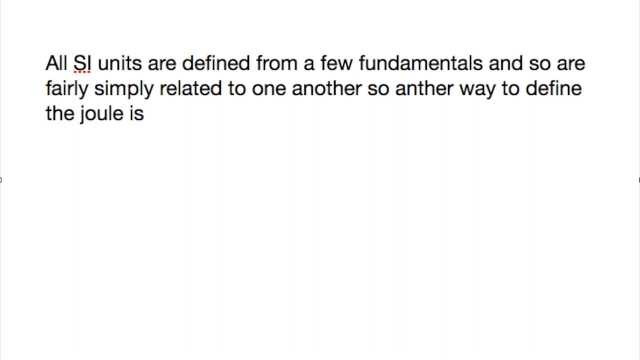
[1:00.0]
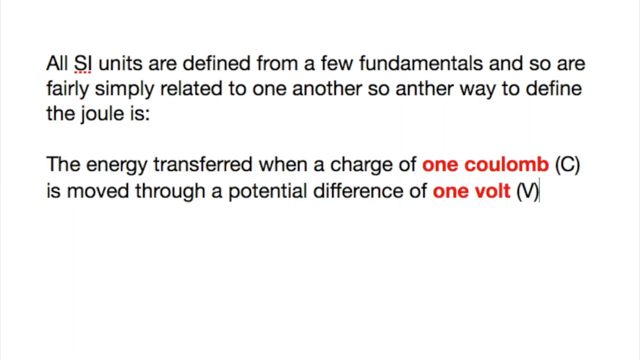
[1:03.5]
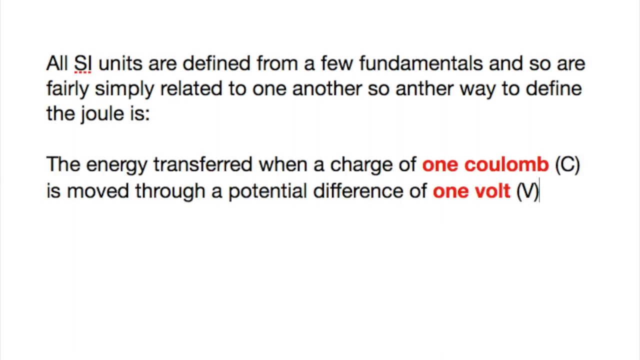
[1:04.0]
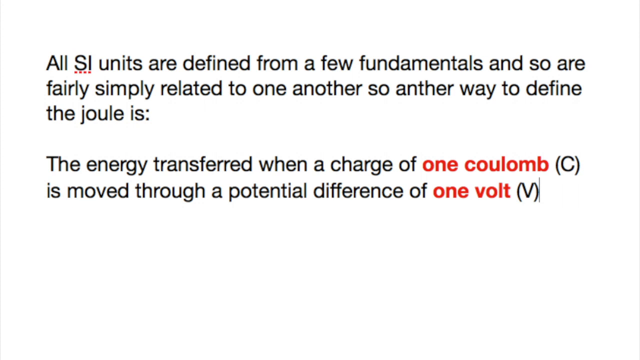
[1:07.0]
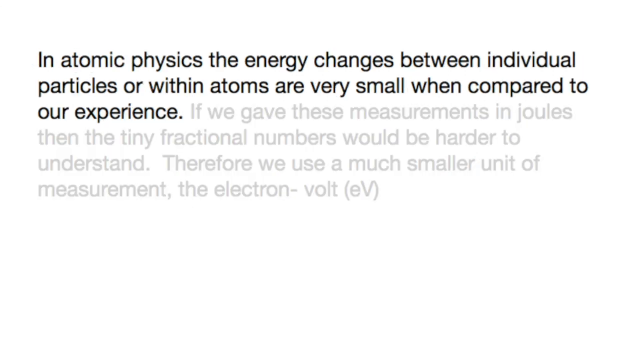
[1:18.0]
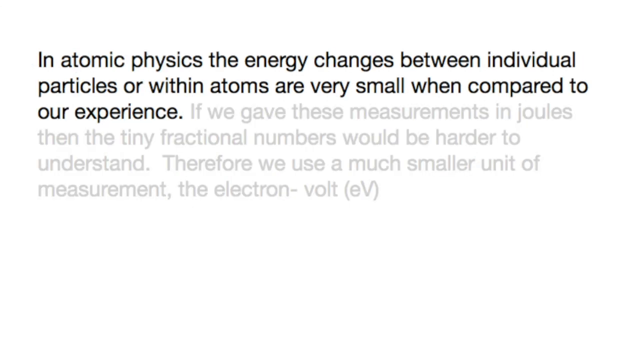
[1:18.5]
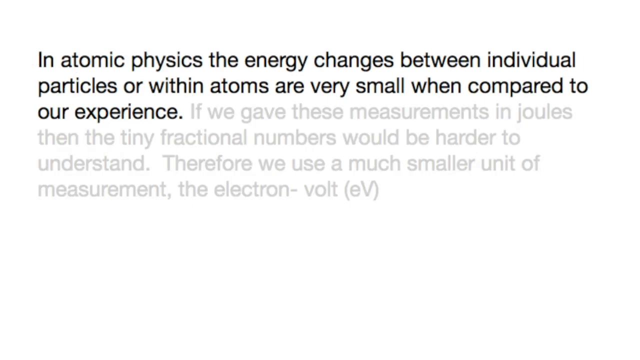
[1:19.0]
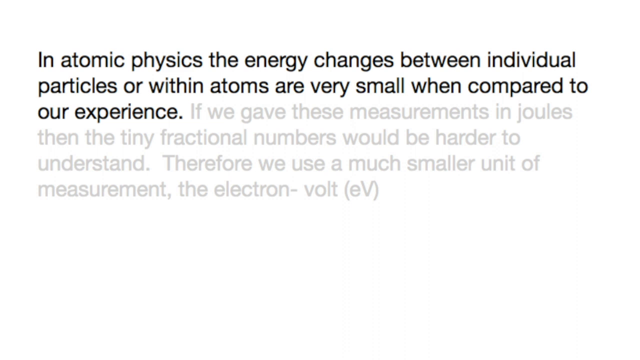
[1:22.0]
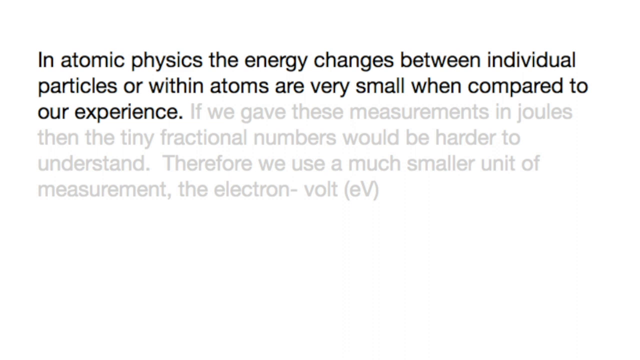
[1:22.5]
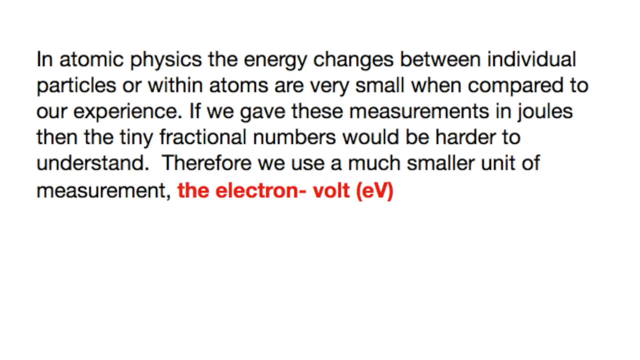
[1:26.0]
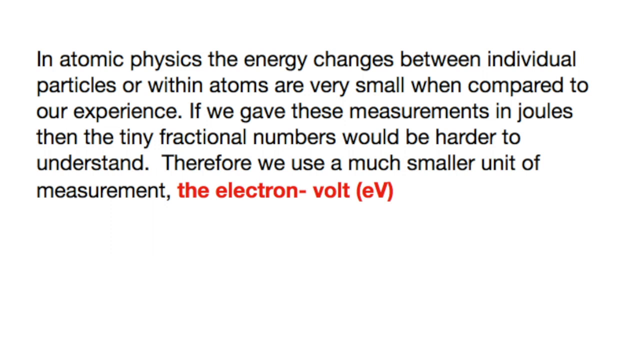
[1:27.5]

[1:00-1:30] On-screen text beginning "in atomic physics" discusses energy changes between individual particles and mentions the volt. It is shown in black text over a white background, with an insert.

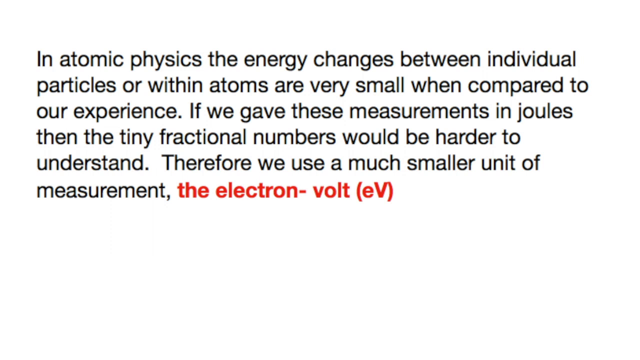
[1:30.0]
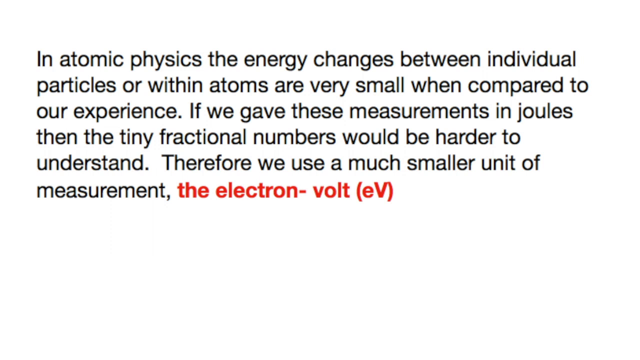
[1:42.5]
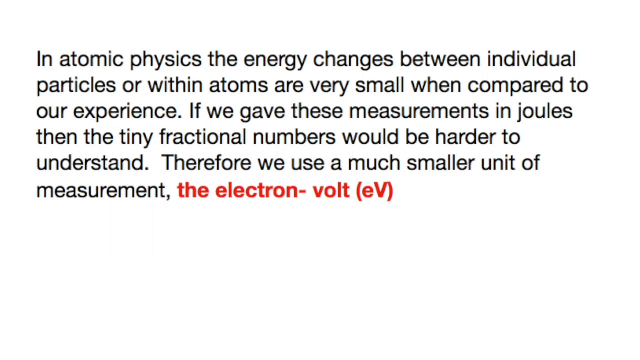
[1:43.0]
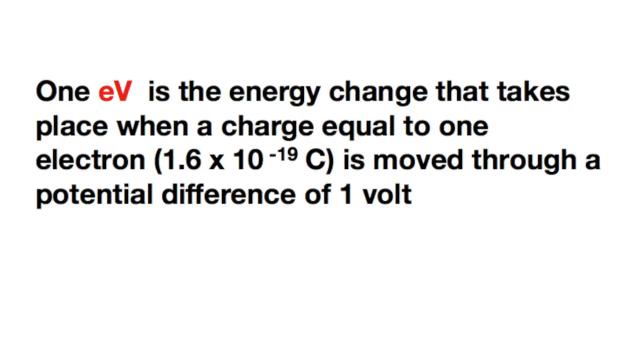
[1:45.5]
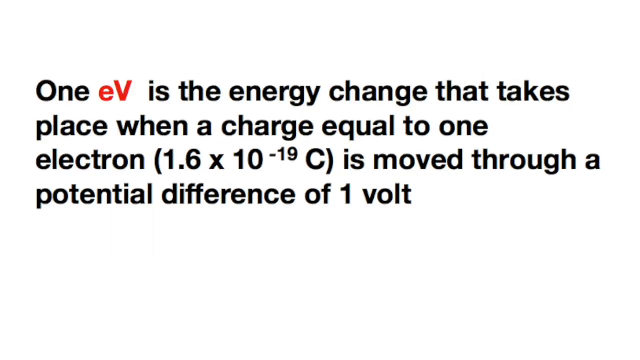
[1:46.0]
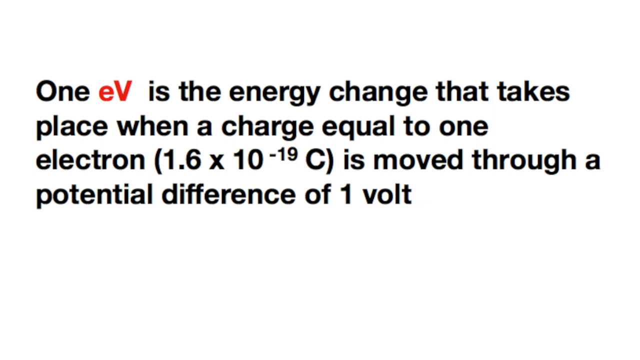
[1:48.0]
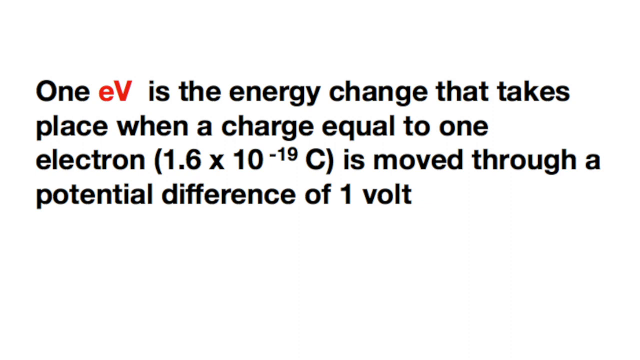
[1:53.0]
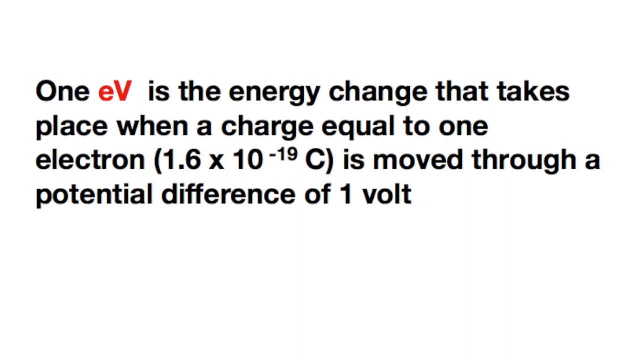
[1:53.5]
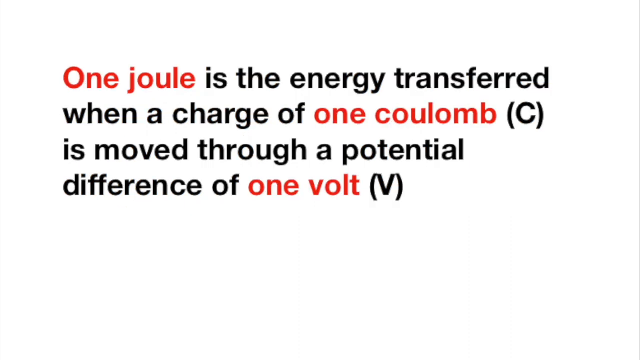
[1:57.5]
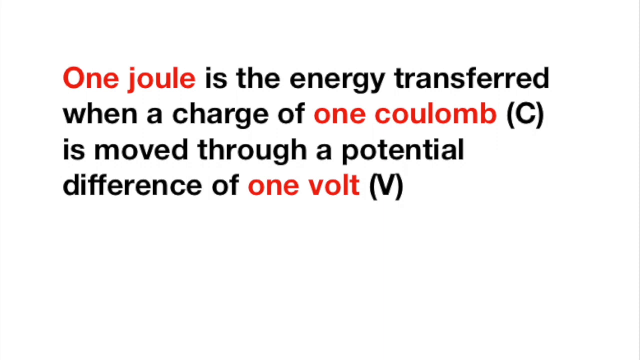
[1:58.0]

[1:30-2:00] On-screen text discusses energy changes between individual particles in atomic physics and a much smaller unit of measurement, the electron volt. The text is in black.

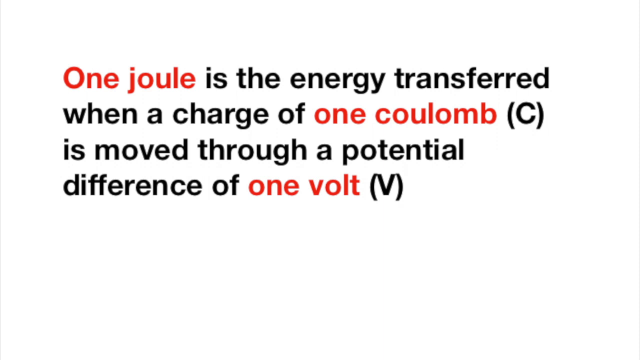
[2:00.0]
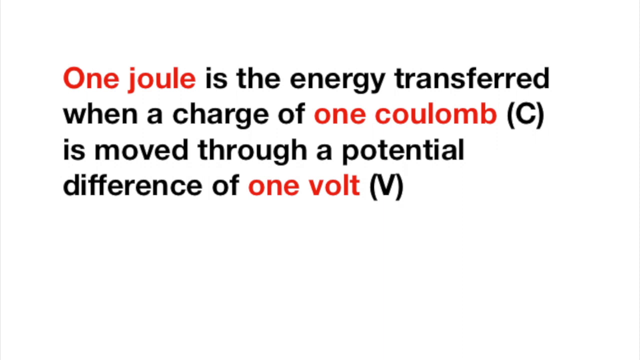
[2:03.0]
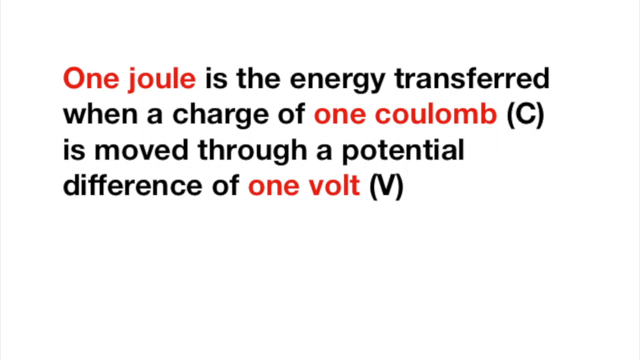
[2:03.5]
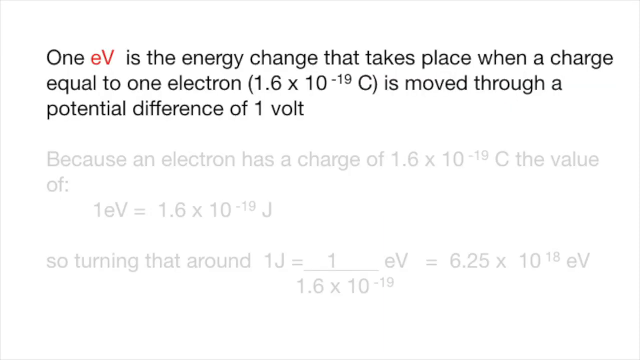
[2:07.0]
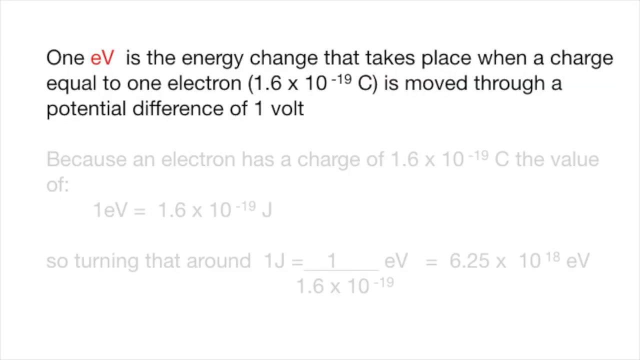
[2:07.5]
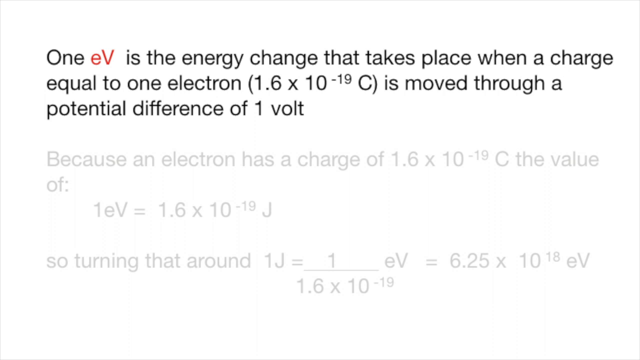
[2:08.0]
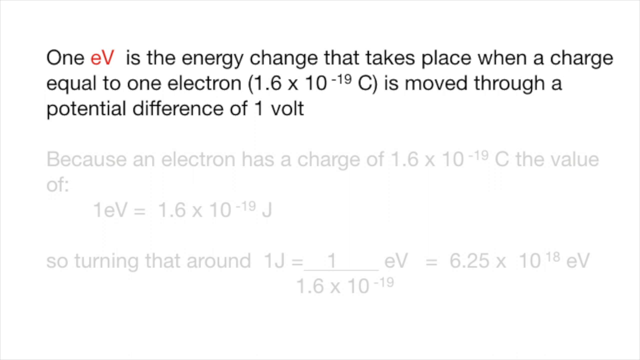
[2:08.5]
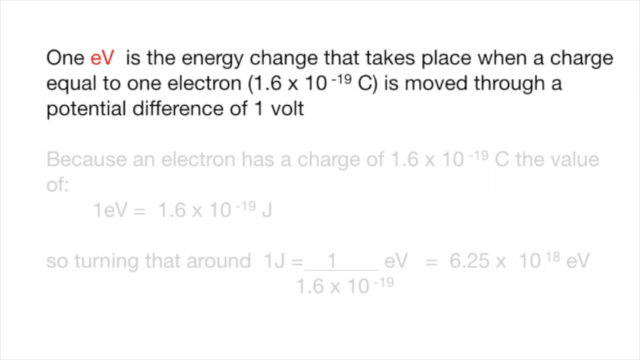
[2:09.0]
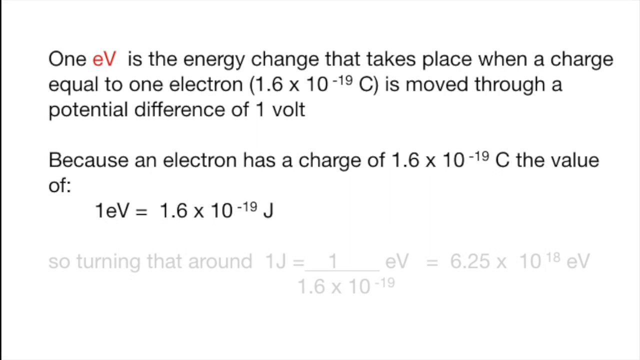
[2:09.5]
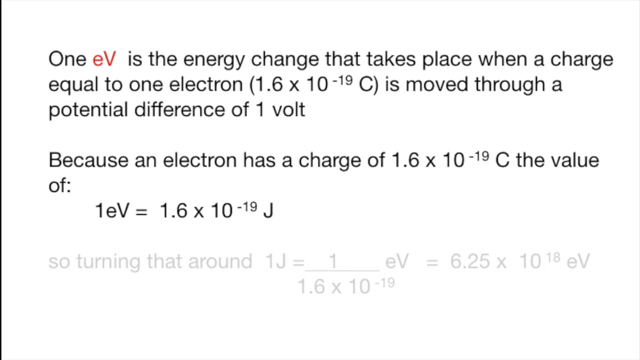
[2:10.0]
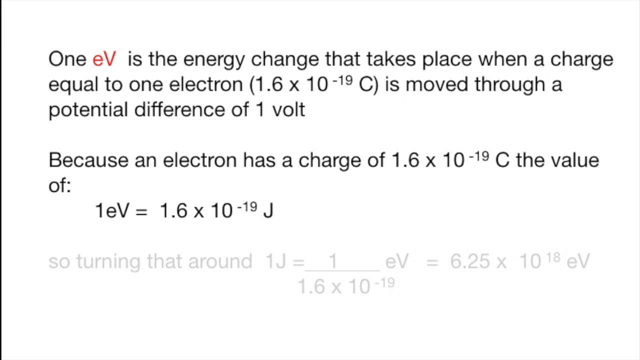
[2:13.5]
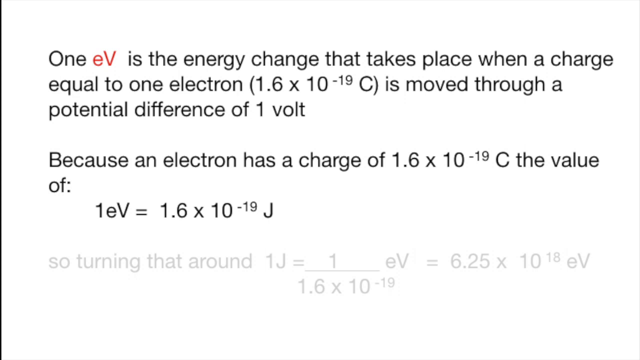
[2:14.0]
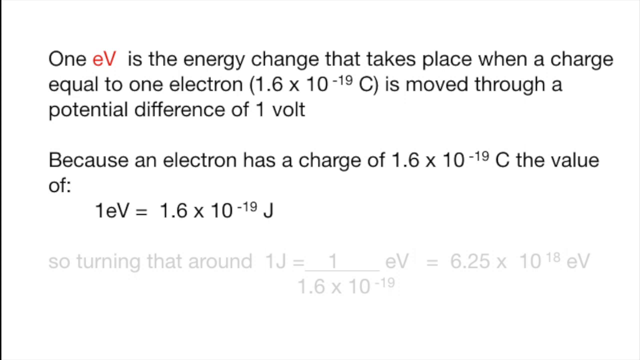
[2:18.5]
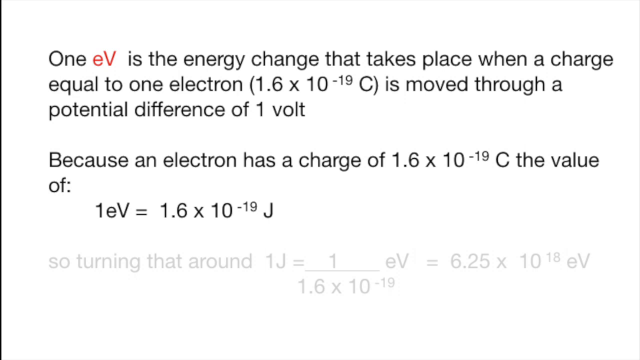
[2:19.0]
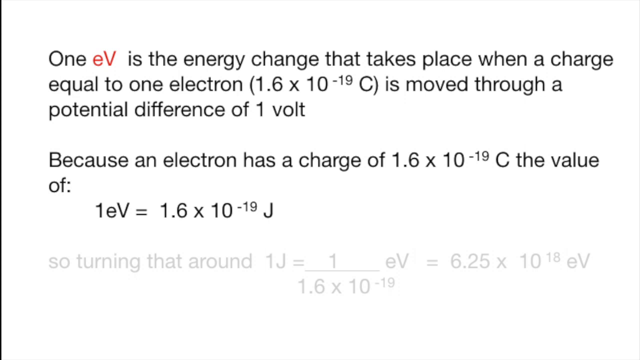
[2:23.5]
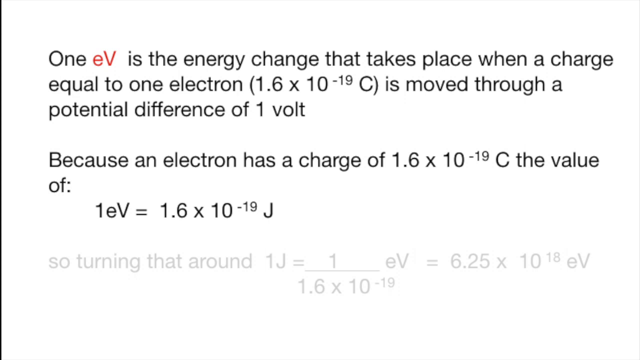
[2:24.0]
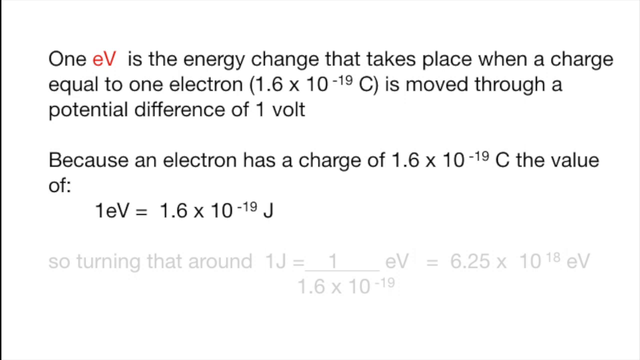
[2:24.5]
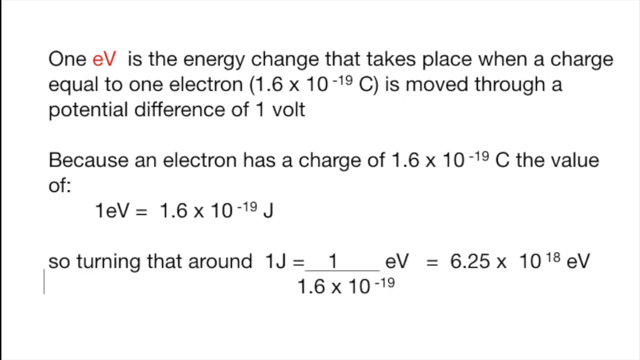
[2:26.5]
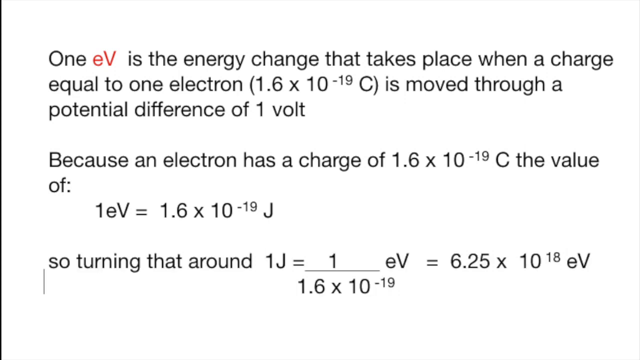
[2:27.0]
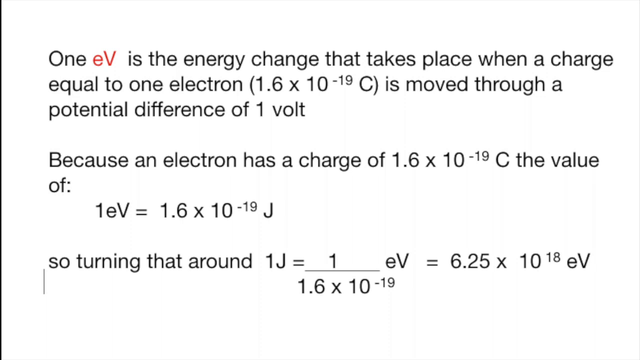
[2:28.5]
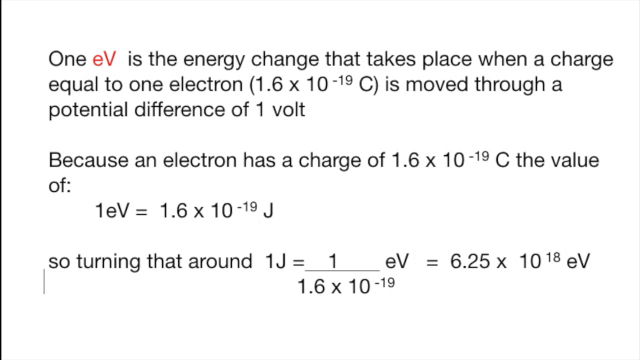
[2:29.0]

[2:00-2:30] Some units, including one joule, are shown in blue and red, in contrast to the rest of the text, which is in black.